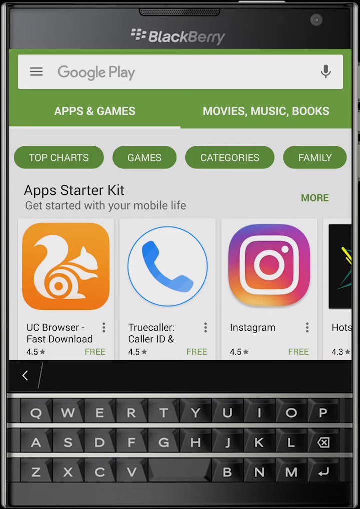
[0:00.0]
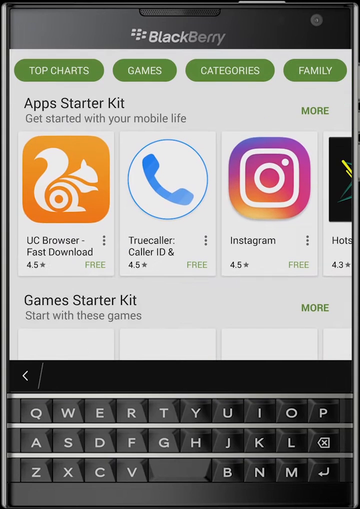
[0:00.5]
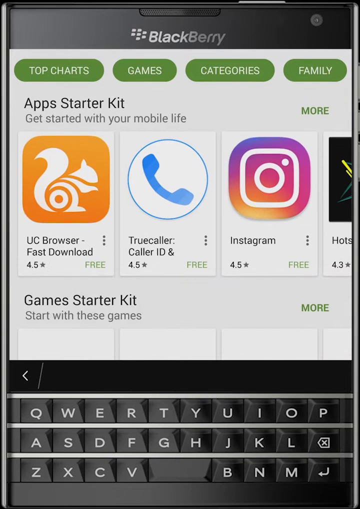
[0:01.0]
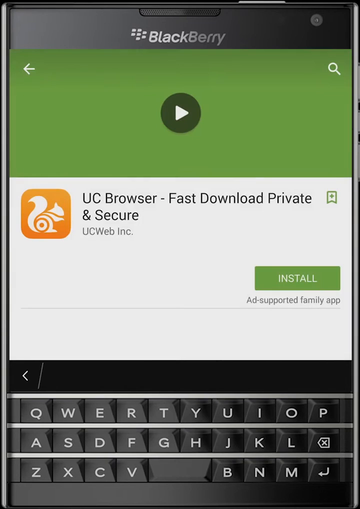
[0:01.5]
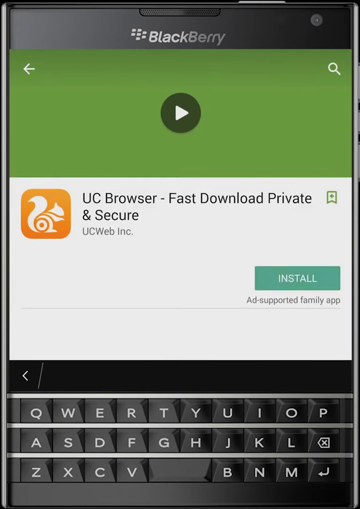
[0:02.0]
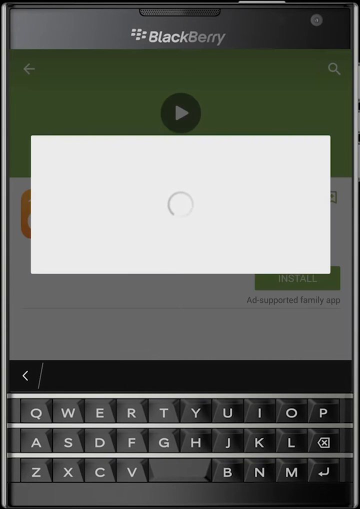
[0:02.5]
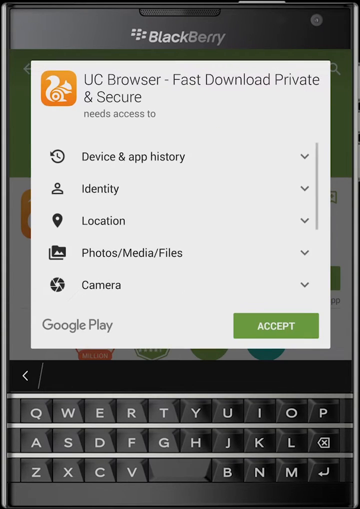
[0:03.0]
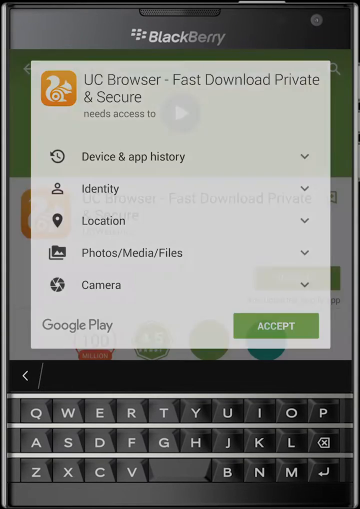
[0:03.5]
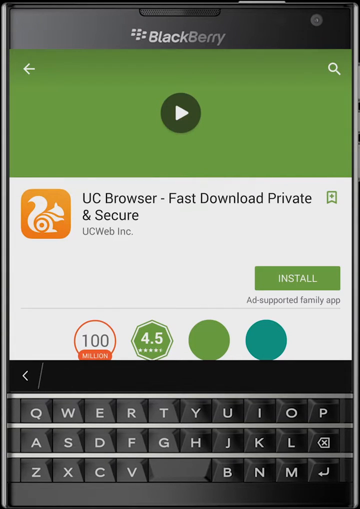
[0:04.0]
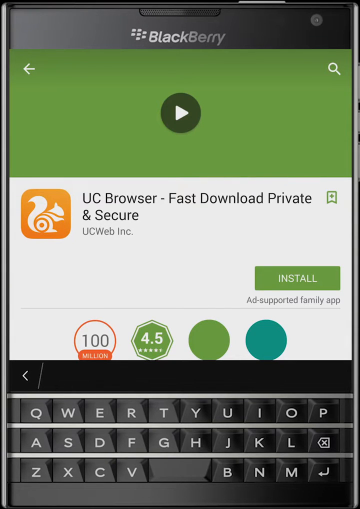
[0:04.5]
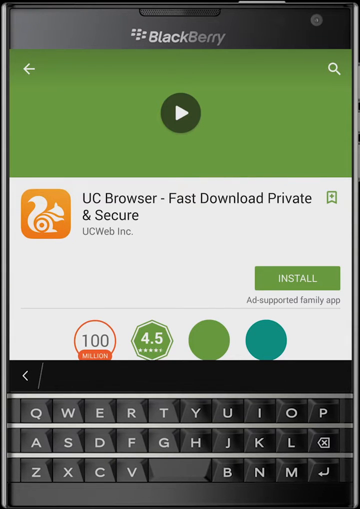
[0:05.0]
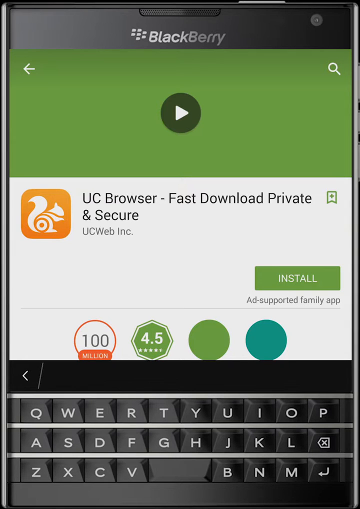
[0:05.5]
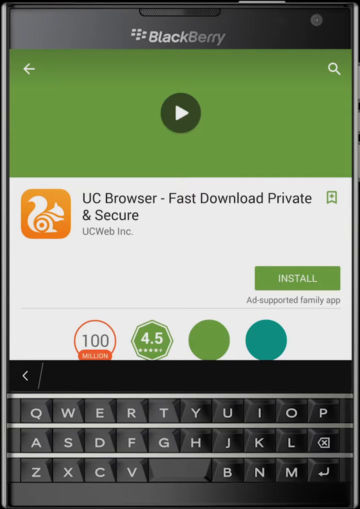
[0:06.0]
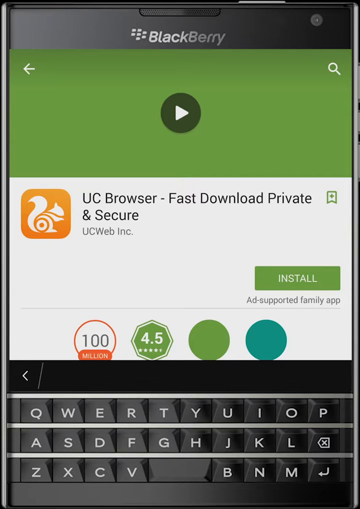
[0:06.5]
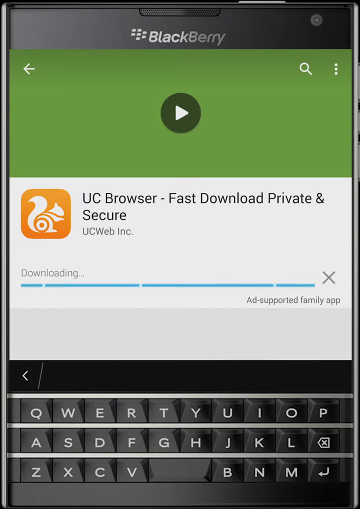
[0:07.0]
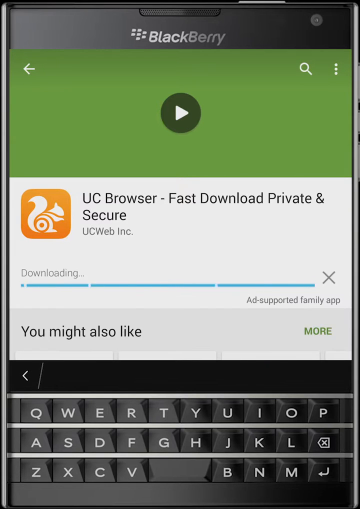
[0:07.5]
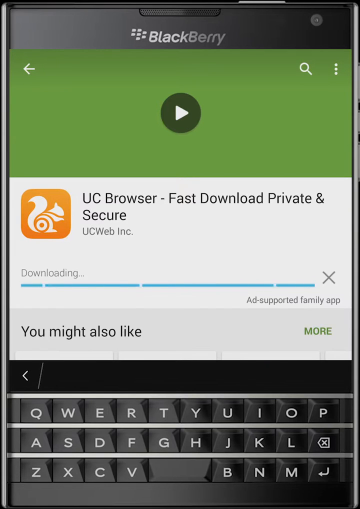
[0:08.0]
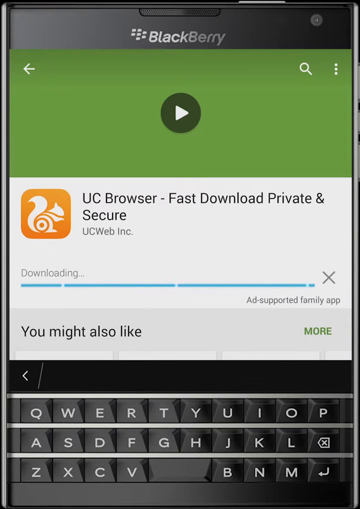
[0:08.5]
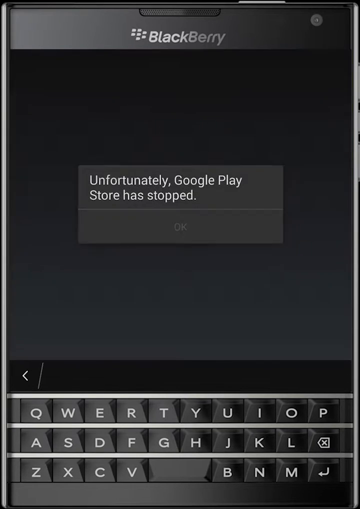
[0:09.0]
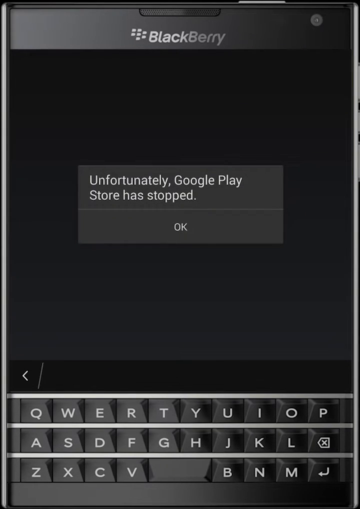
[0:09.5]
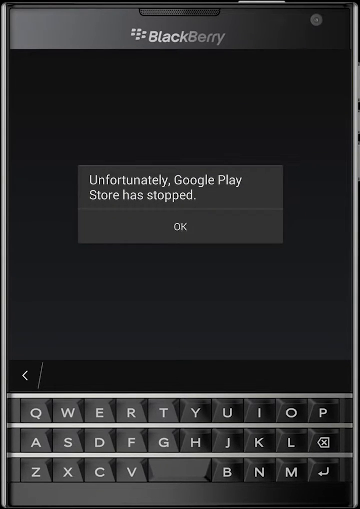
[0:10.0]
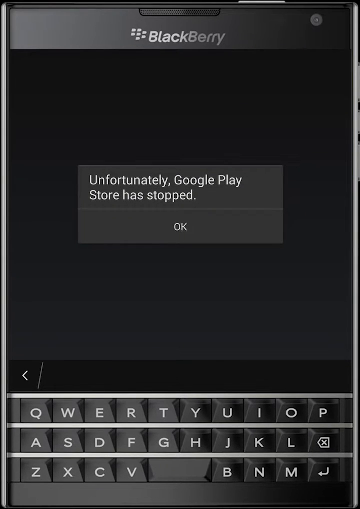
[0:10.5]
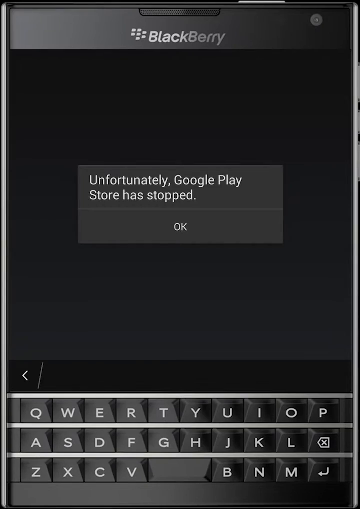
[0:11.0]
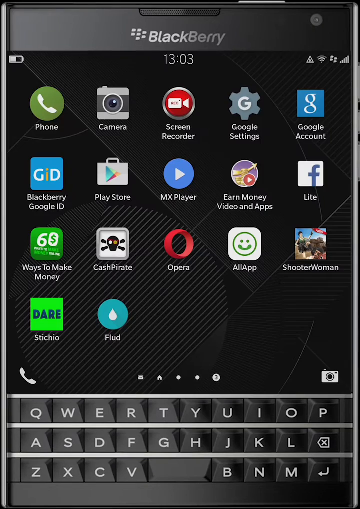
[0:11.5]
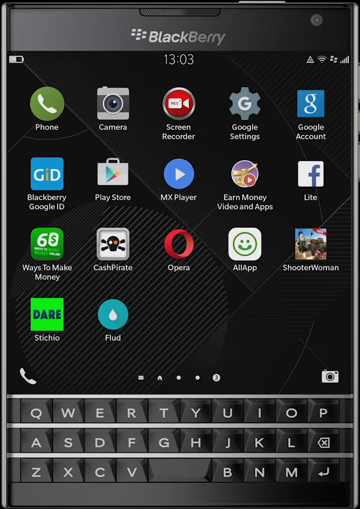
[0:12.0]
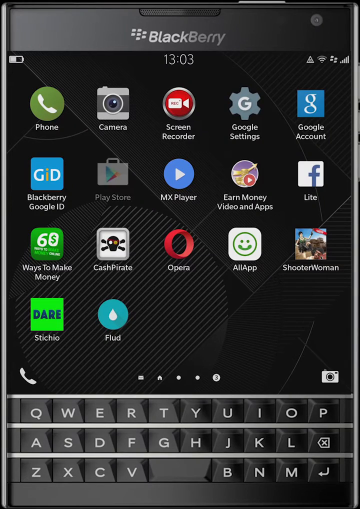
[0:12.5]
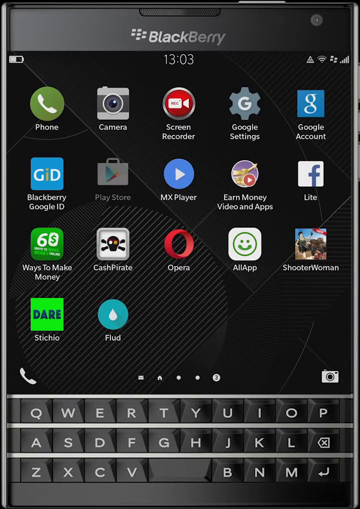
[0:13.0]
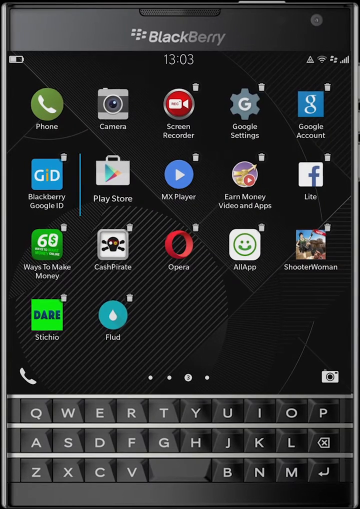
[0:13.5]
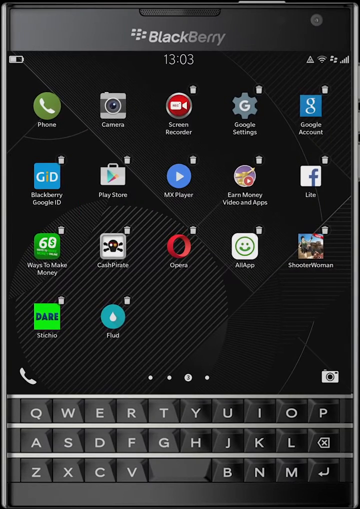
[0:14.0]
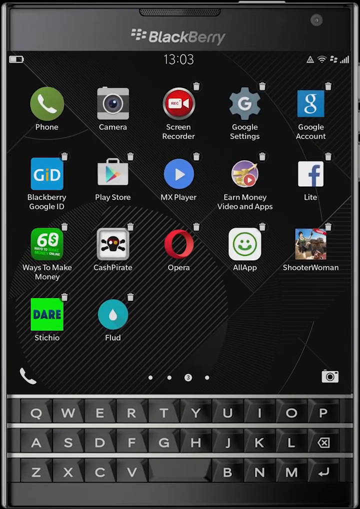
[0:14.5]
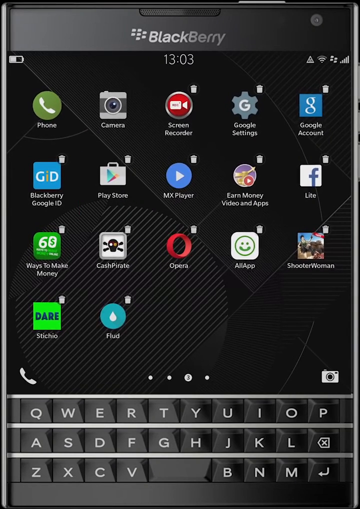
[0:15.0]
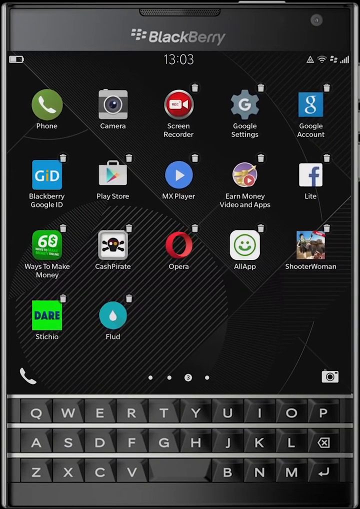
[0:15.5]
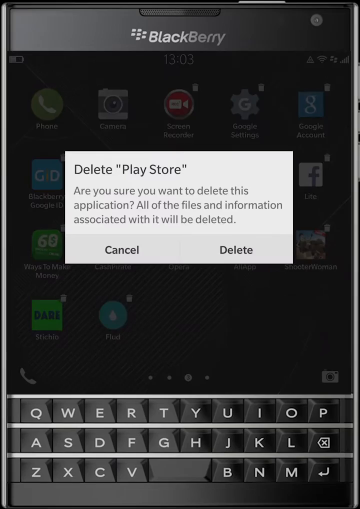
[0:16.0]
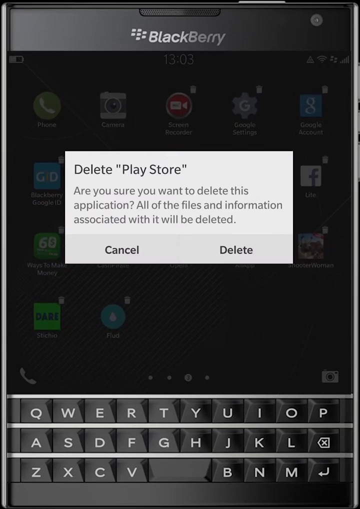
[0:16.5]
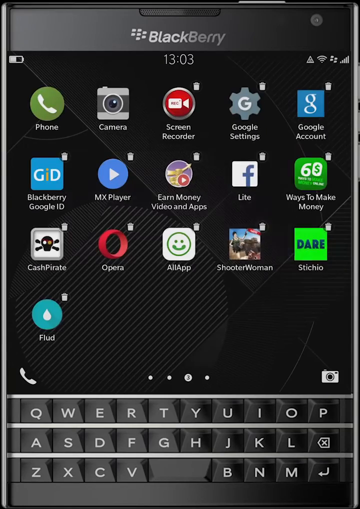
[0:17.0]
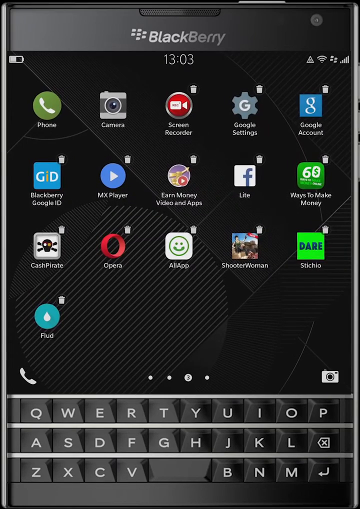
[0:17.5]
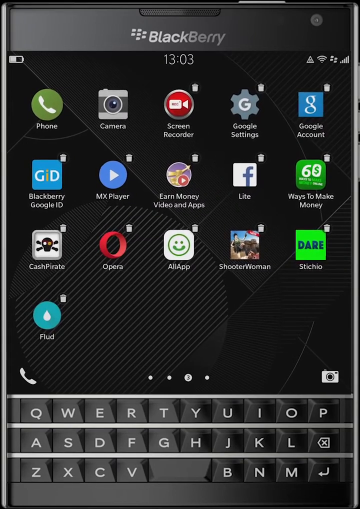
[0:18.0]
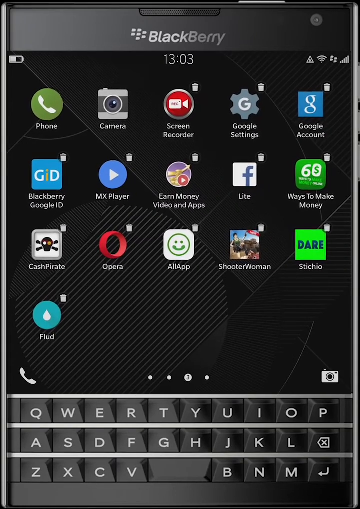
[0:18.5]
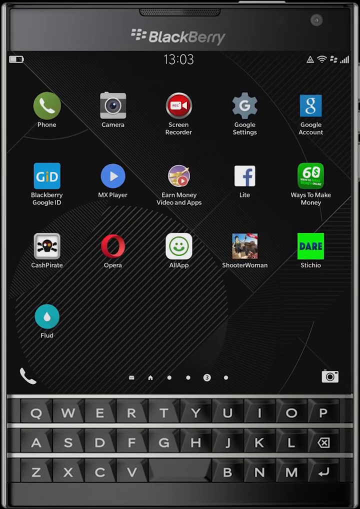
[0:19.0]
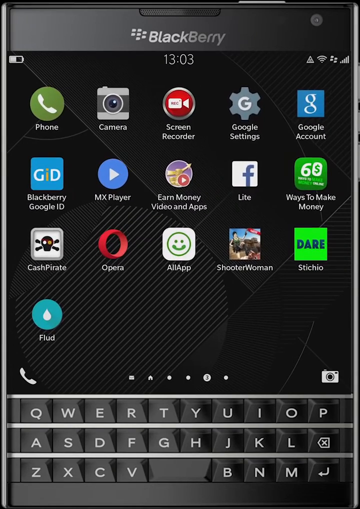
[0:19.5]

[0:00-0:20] A person tries to download the UC browser on their Blackberry phone using the Google Play Store, but the store suddenly stops working. The user navigates around the device looking for the settings to resolve the issue, and deletes things on the phone.